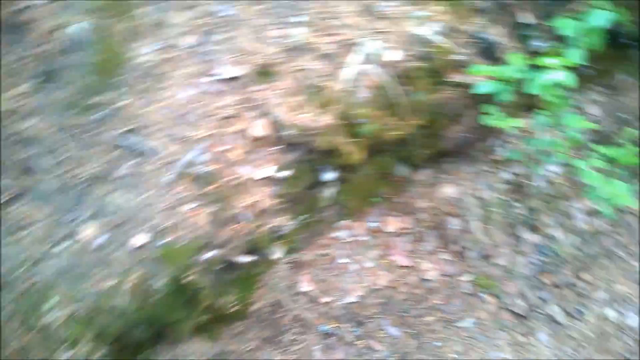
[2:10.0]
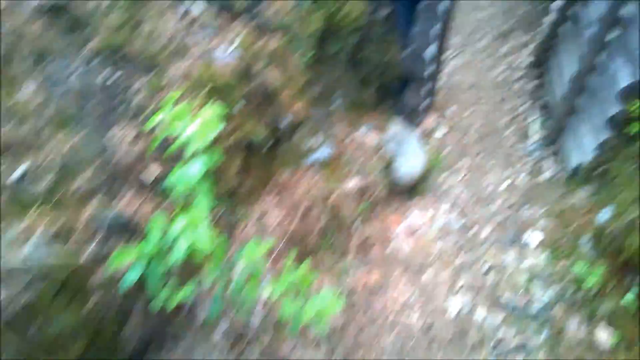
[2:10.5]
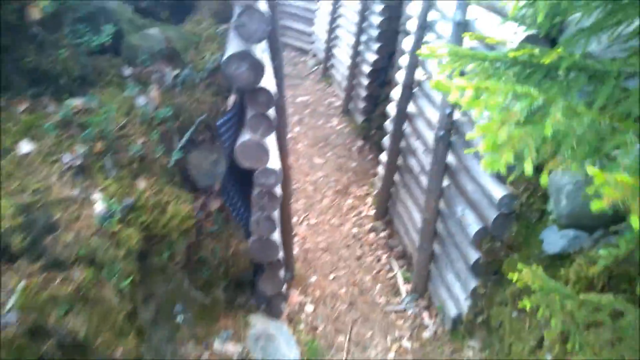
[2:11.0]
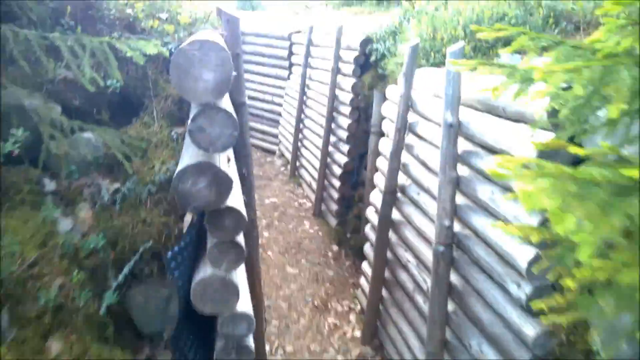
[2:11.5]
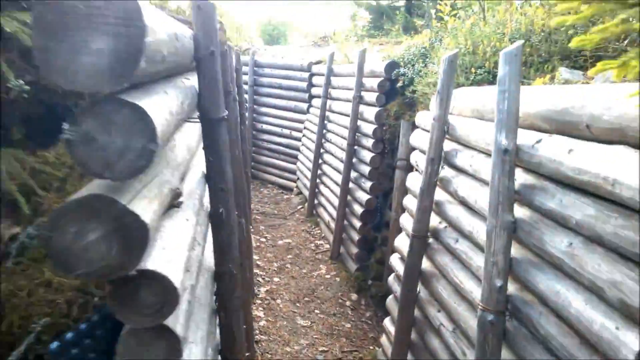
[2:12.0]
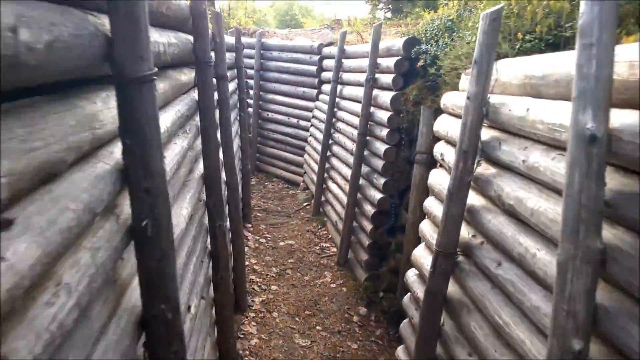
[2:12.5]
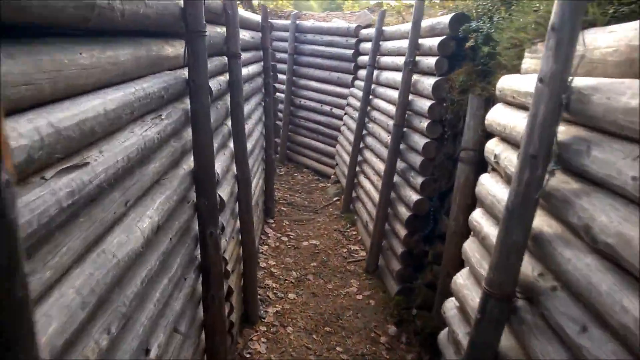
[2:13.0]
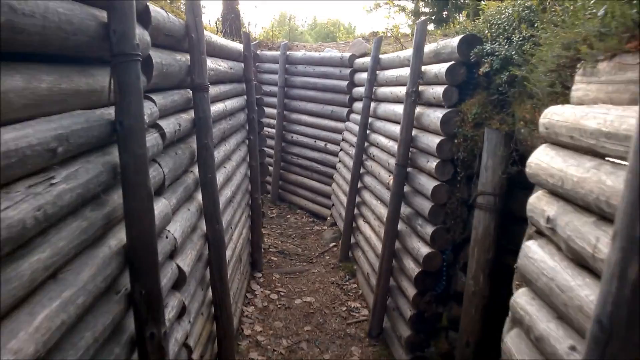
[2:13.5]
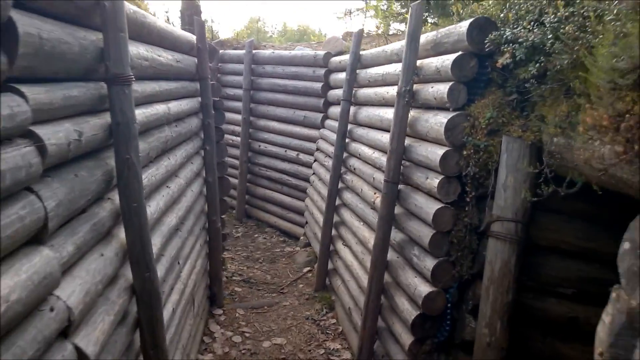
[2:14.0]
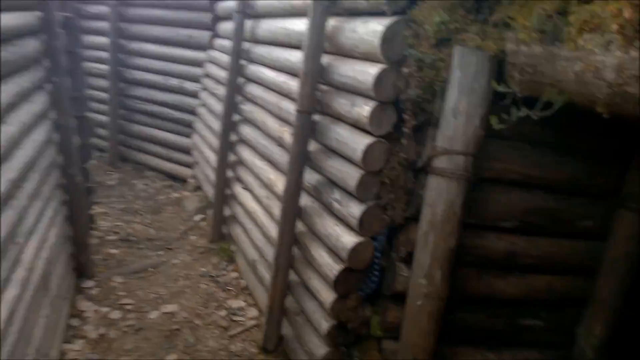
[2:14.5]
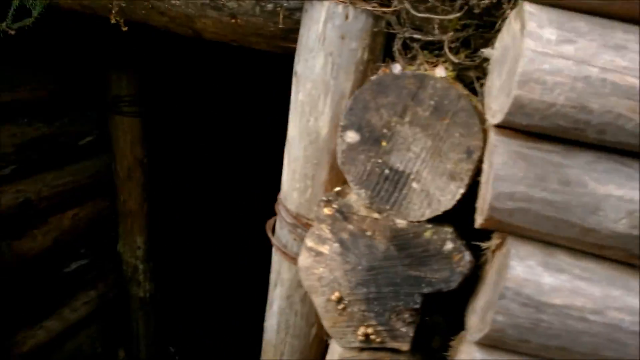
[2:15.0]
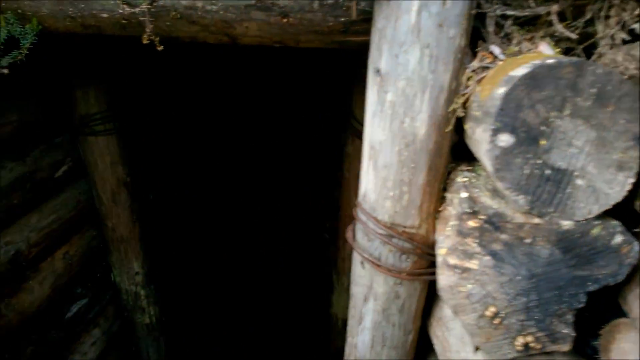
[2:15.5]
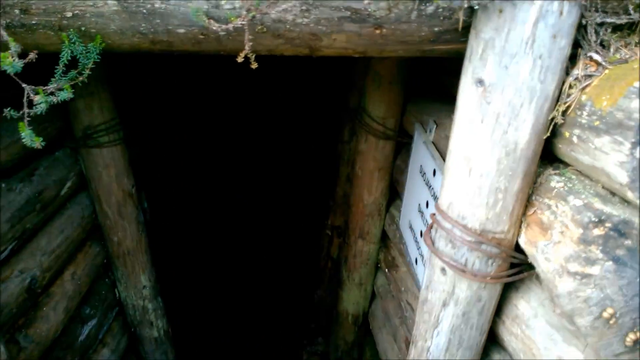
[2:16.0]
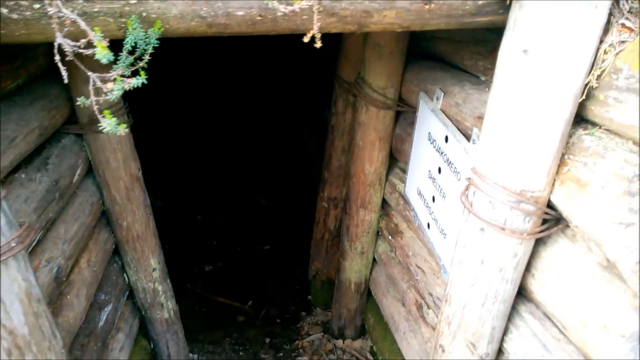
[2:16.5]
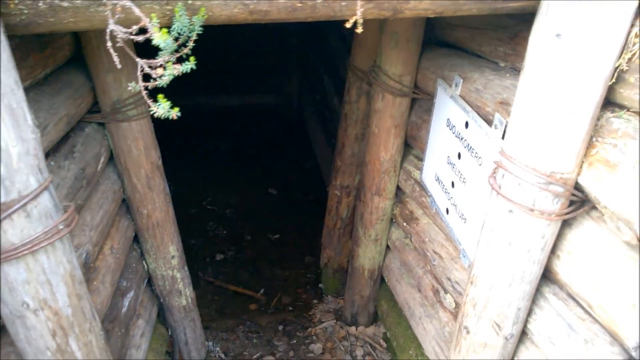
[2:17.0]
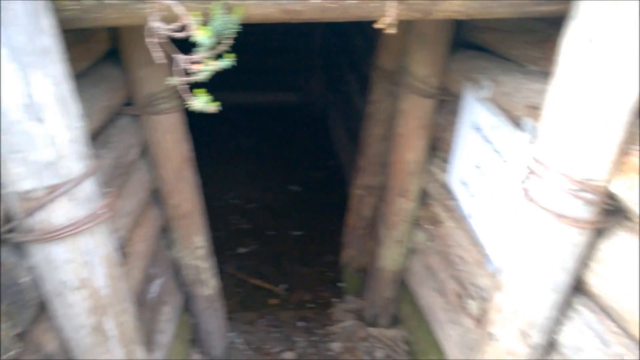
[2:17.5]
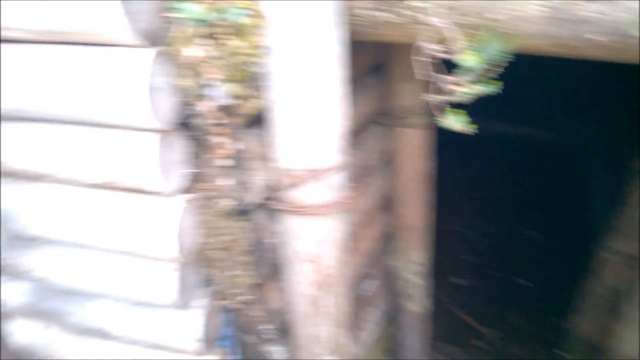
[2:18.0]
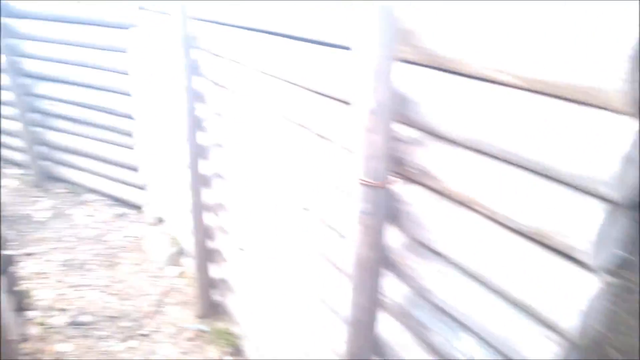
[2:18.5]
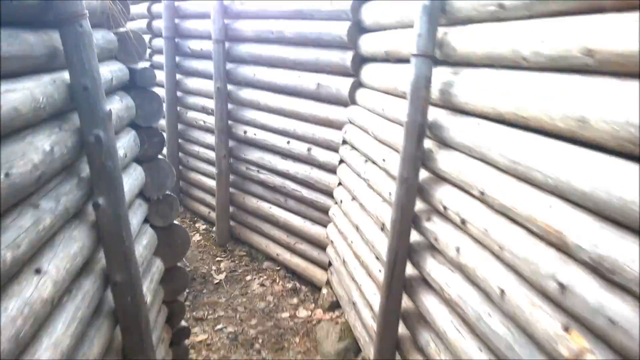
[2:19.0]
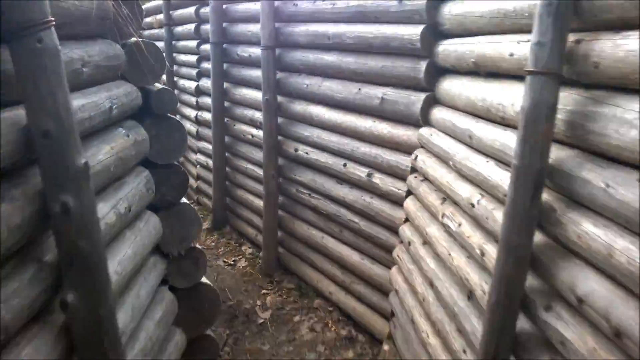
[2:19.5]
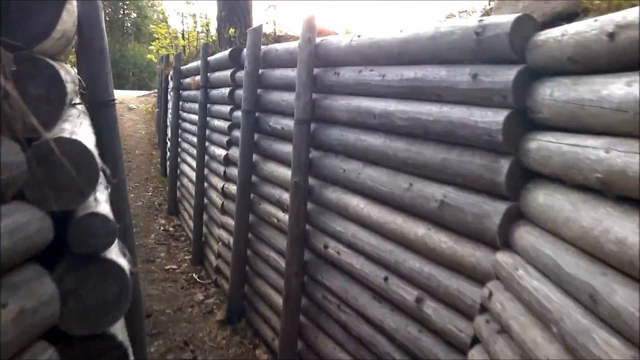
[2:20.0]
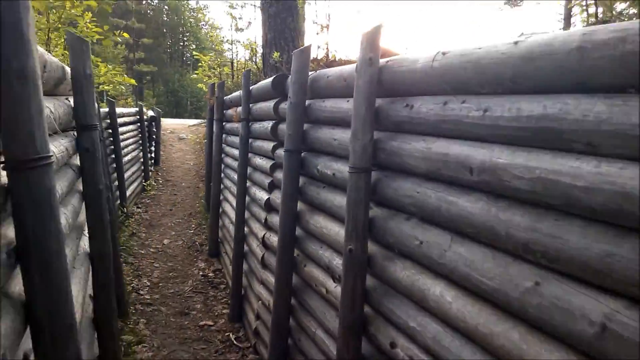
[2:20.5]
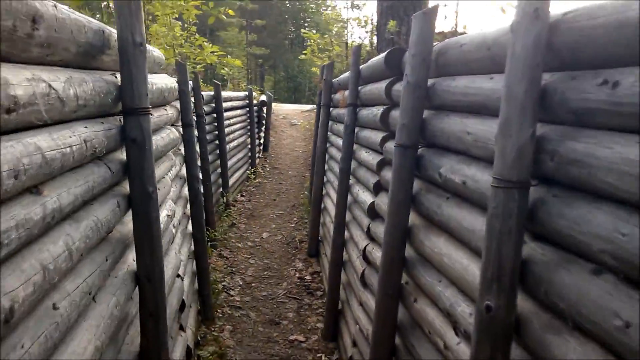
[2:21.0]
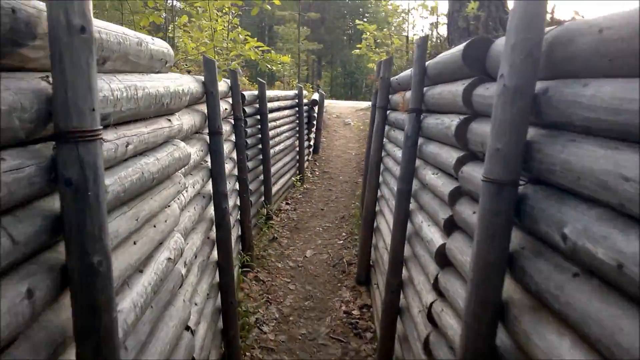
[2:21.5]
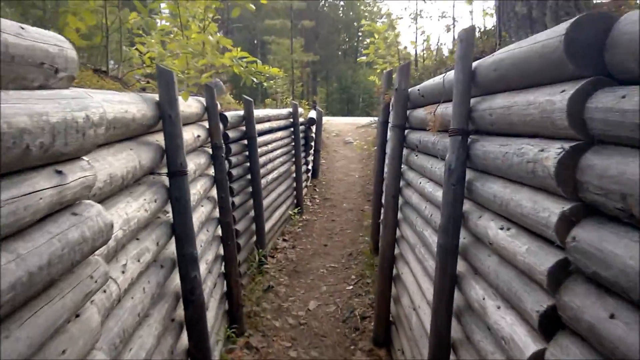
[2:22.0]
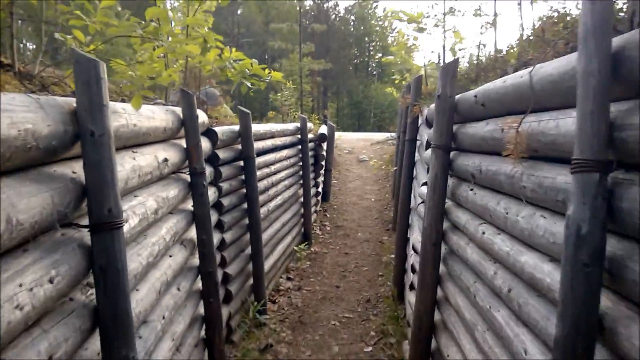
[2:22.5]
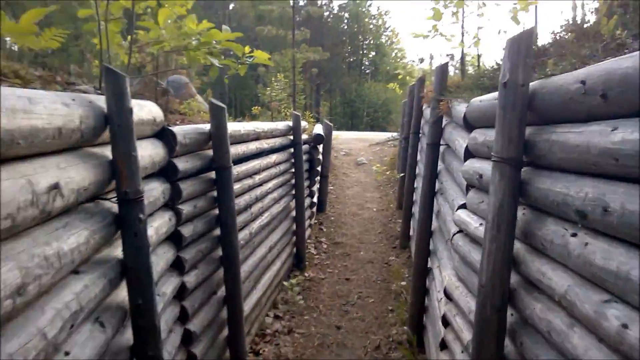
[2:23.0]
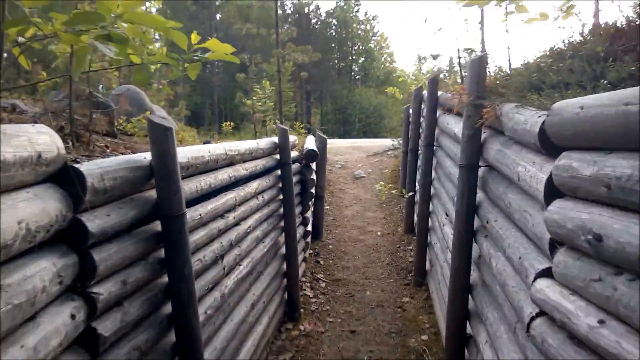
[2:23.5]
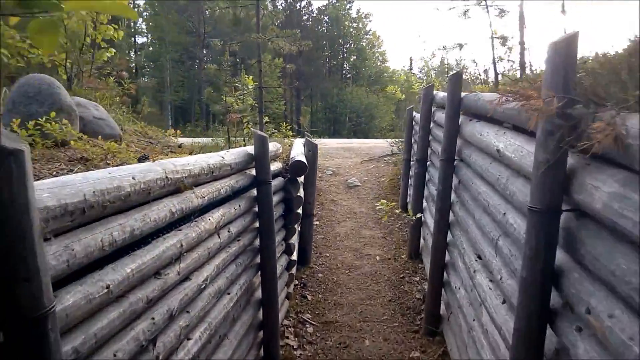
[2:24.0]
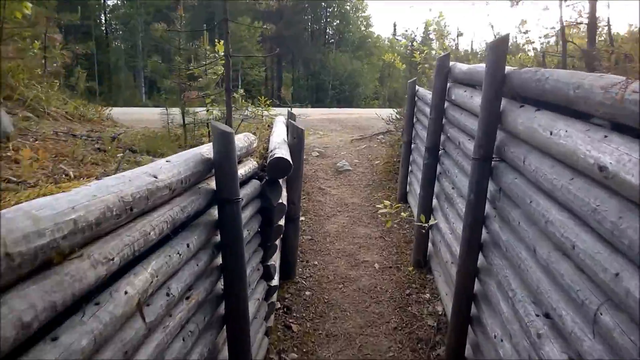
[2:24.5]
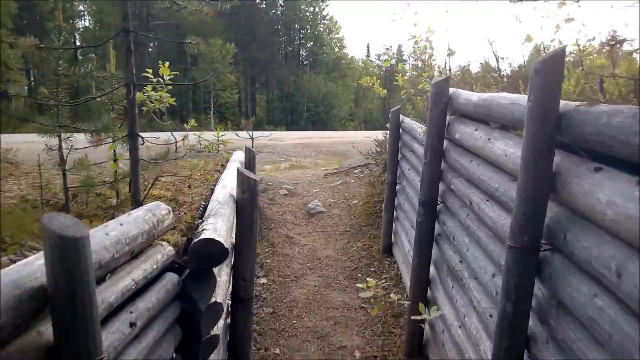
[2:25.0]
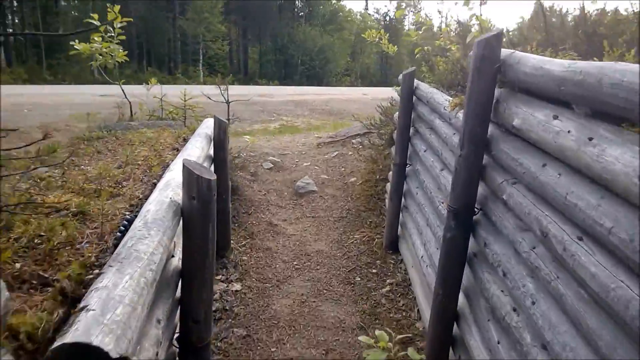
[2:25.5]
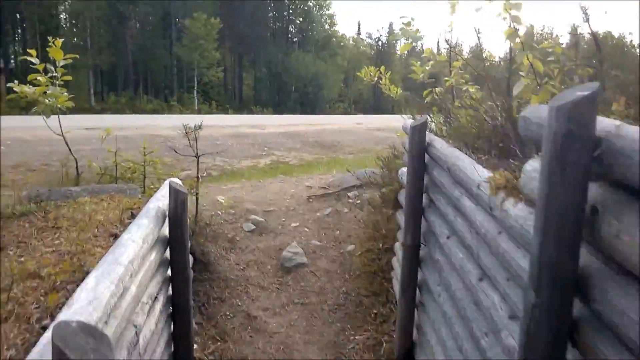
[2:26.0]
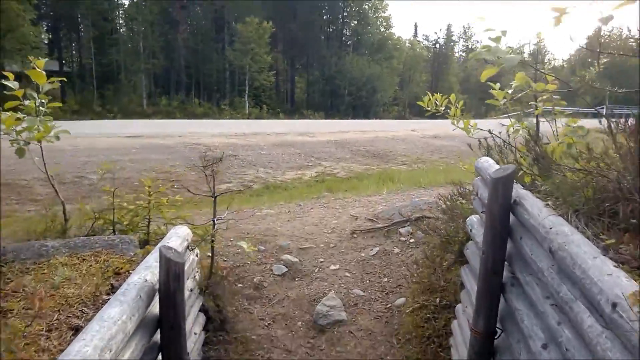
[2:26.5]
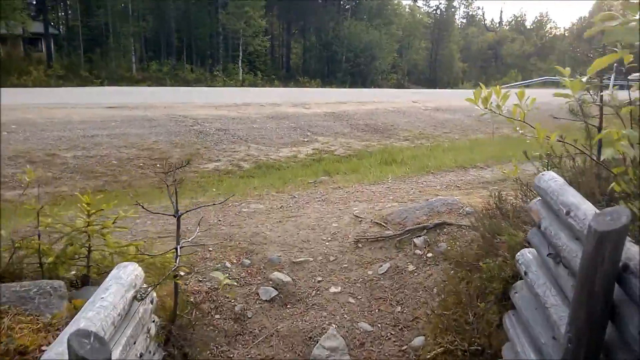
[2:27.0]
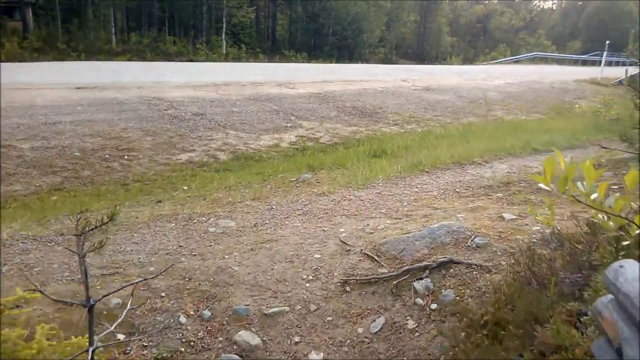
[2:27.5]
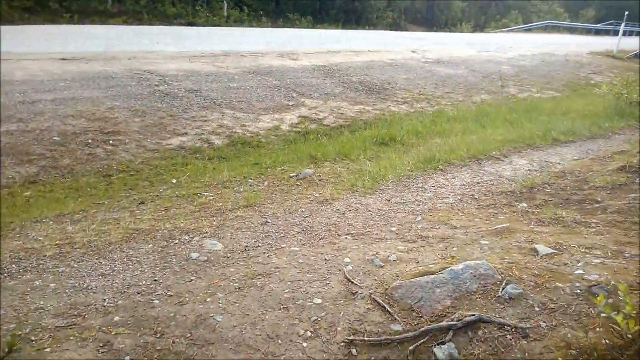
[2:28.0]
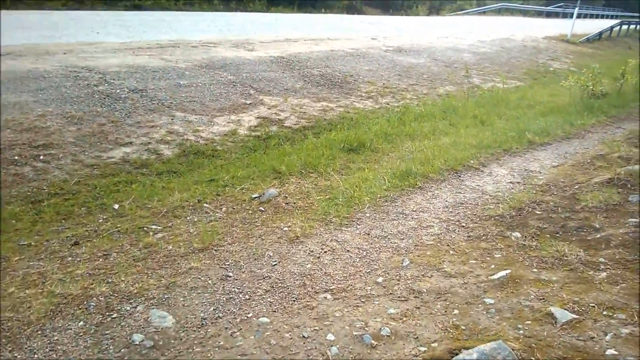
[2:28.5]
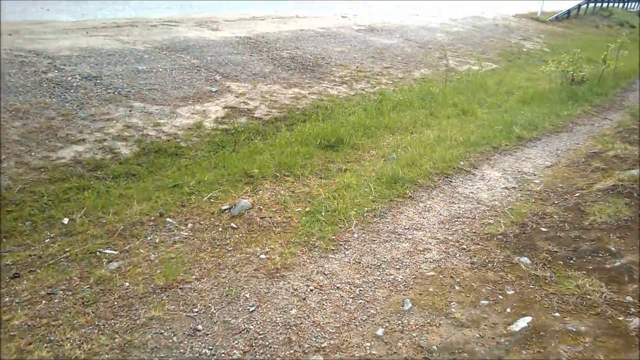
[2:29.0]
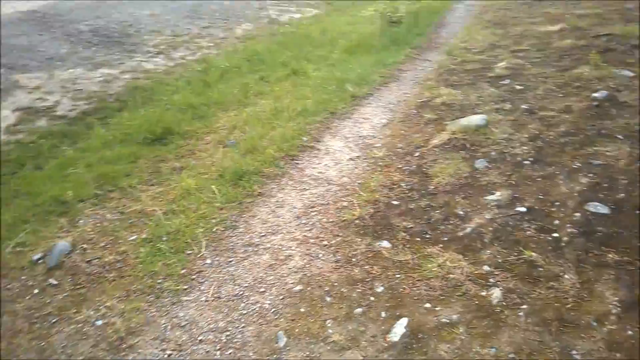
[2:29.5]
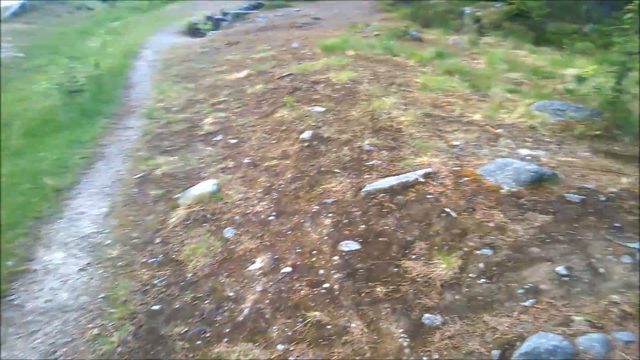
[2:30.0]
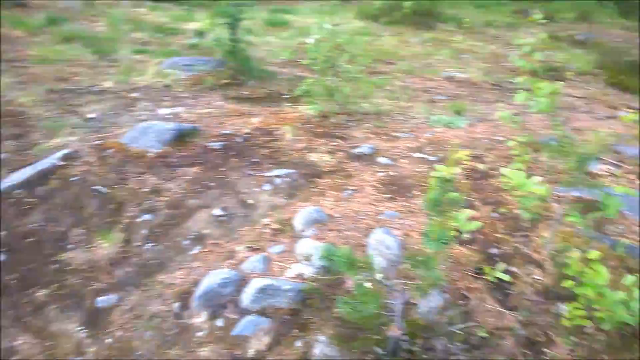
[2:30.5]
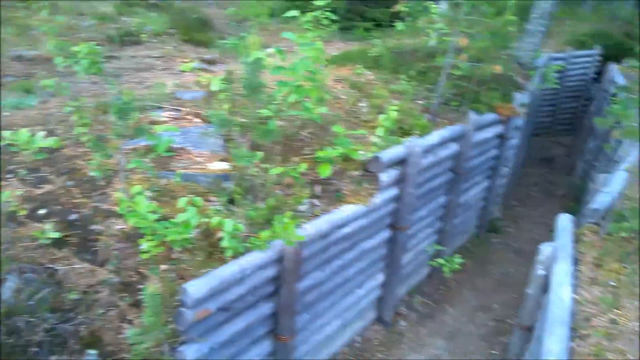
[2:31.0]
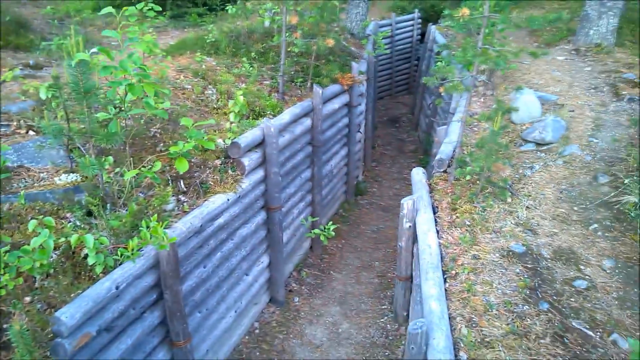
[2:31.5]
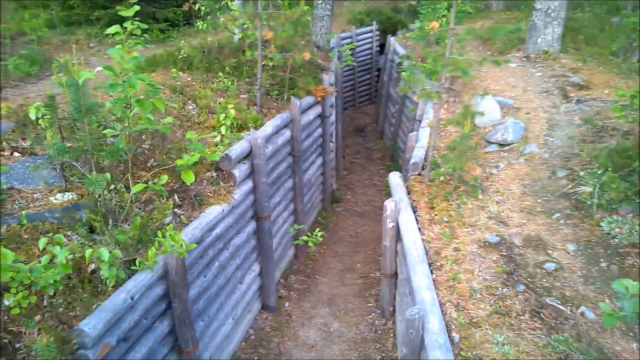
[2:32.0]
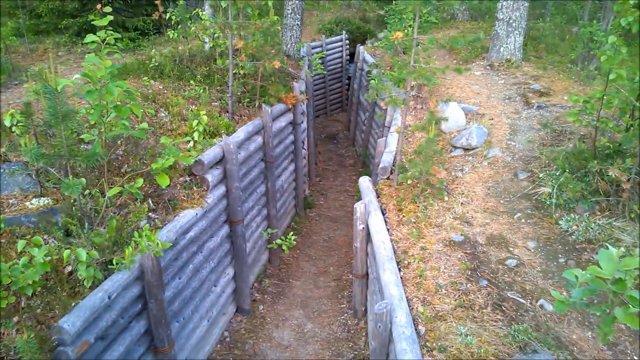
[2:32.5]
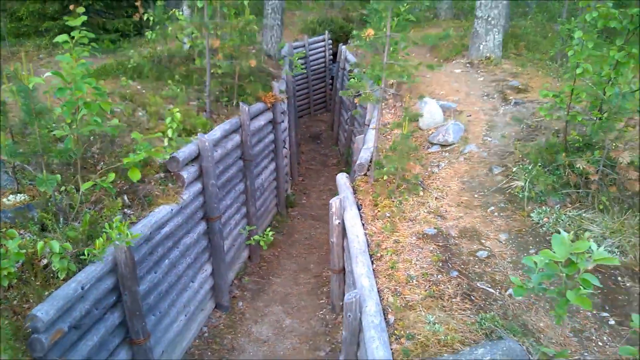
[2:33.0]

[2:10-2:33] The end of the trench structure is shown, then the camera turns around, goes back into the trench and looks again at the entrance of the shelter near the end of the trench. It continues walking through the trench to the other end, which opens onto a flat, field-like area. The camera then turns around to show the part of the trench it just exited. The trench appears to be maintained and in good shape.